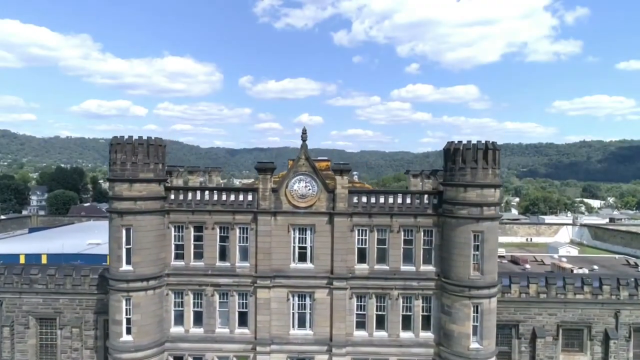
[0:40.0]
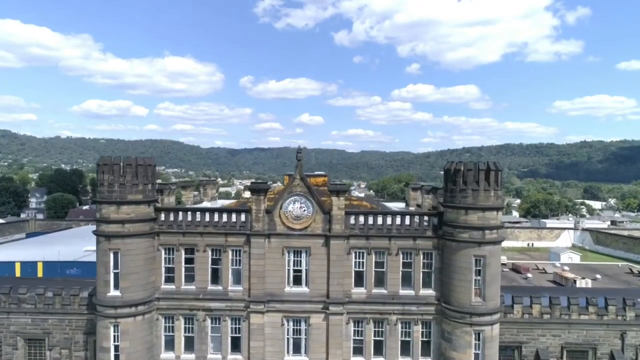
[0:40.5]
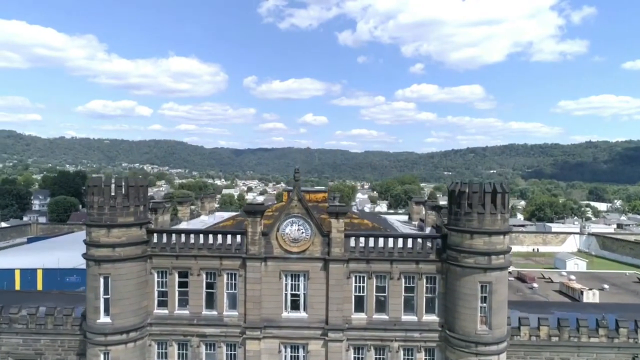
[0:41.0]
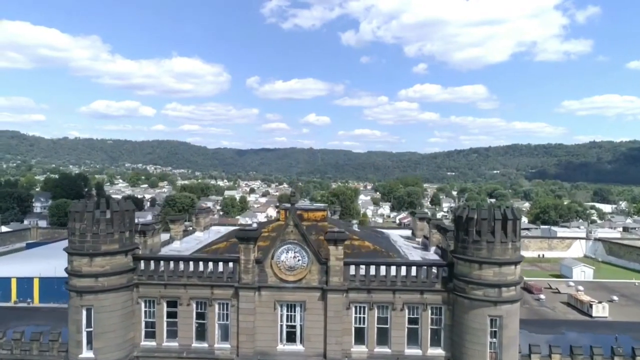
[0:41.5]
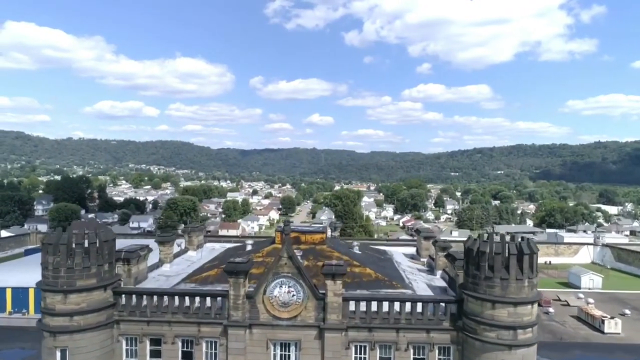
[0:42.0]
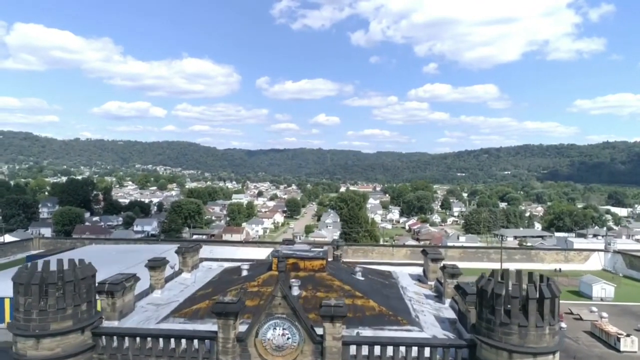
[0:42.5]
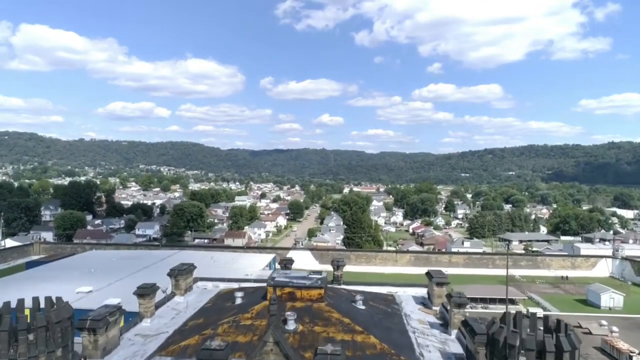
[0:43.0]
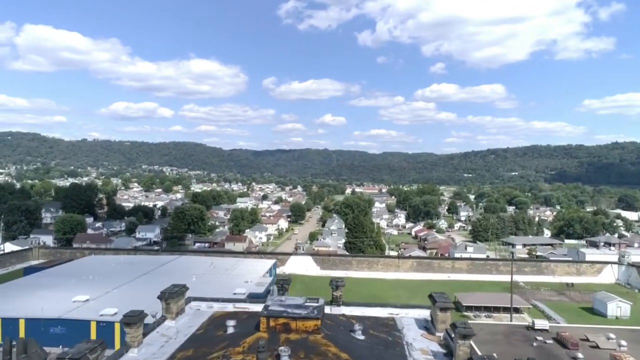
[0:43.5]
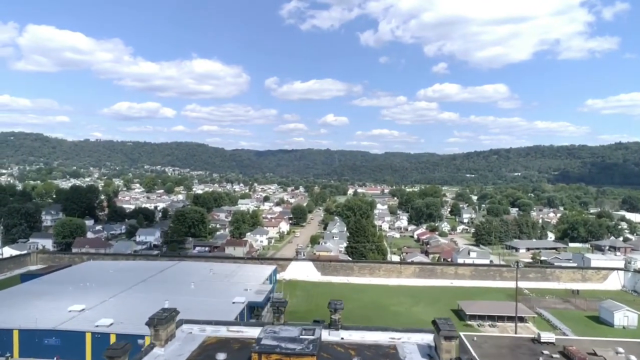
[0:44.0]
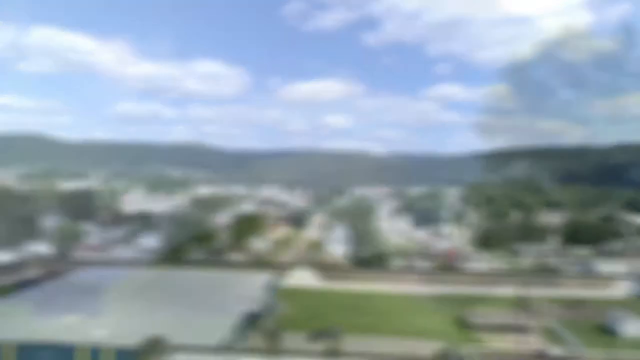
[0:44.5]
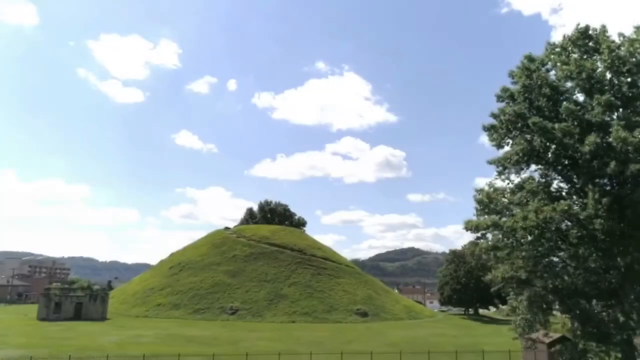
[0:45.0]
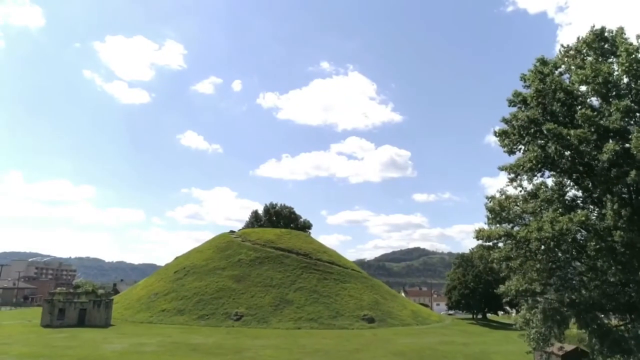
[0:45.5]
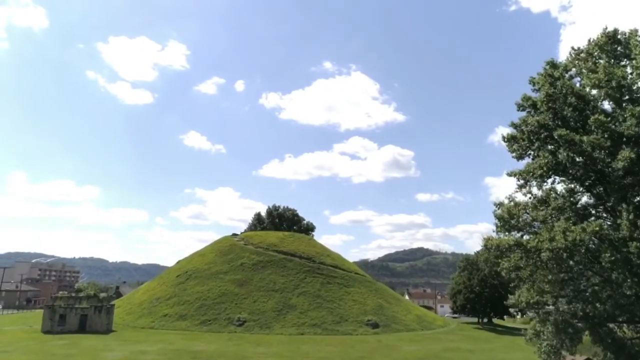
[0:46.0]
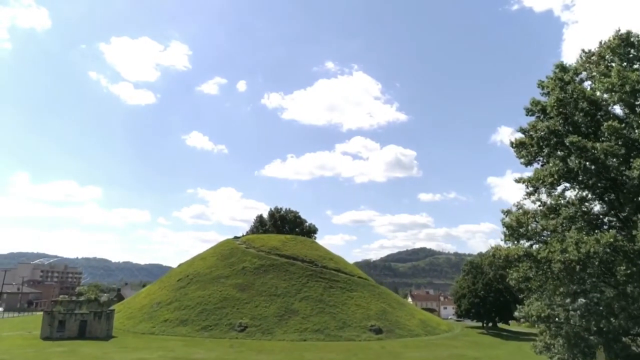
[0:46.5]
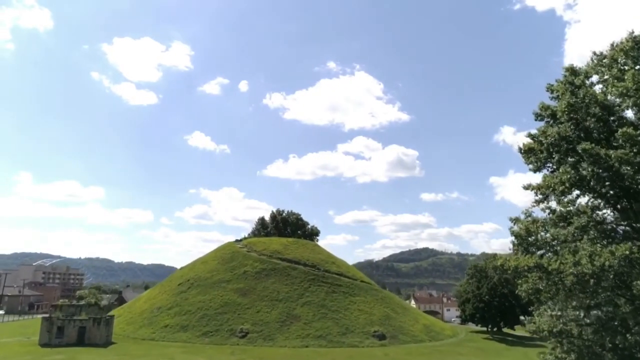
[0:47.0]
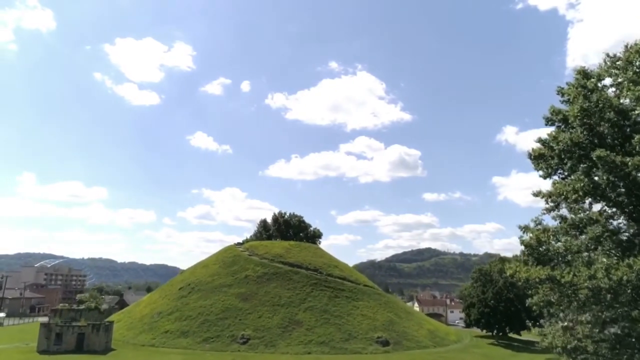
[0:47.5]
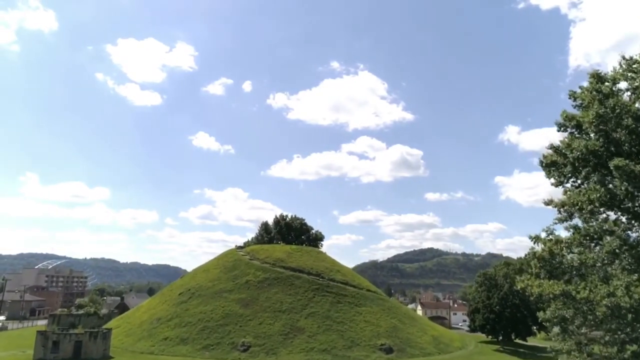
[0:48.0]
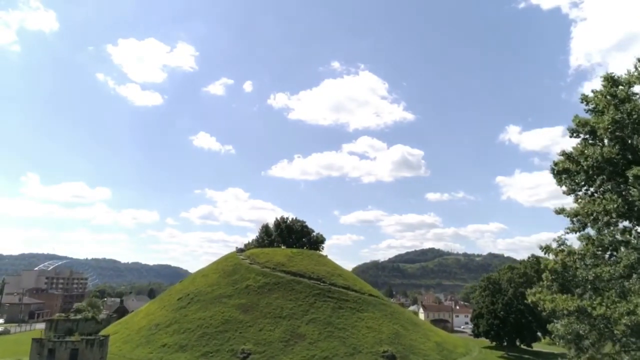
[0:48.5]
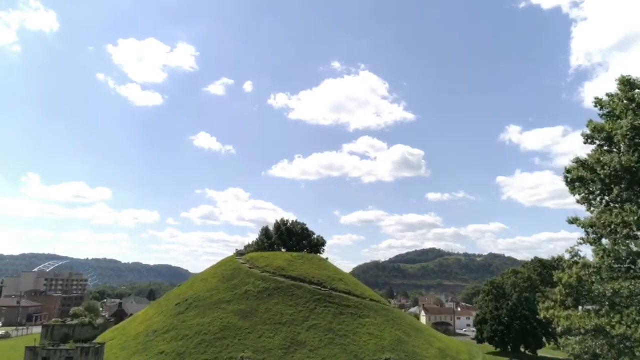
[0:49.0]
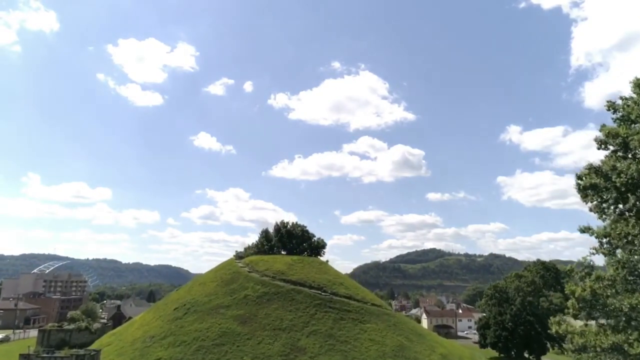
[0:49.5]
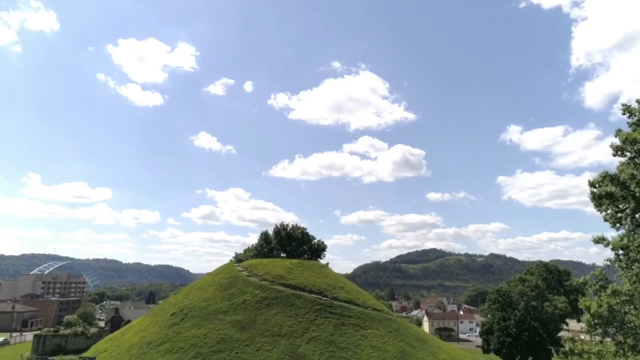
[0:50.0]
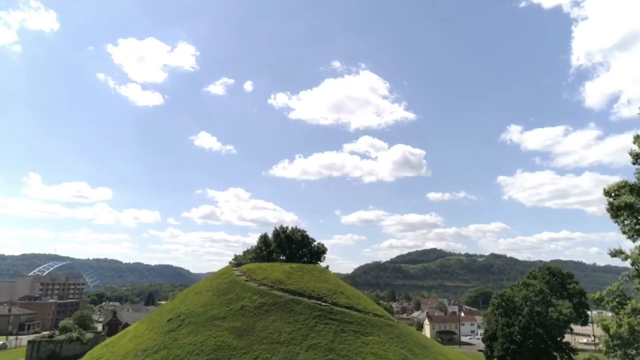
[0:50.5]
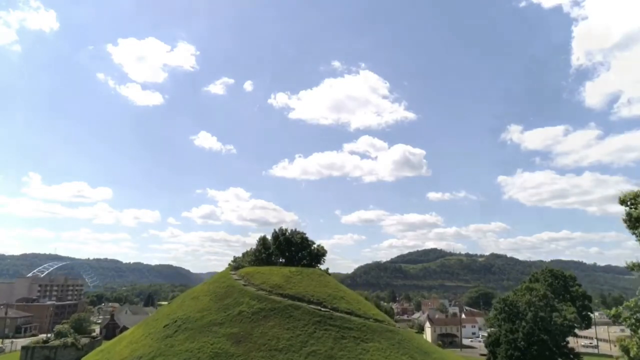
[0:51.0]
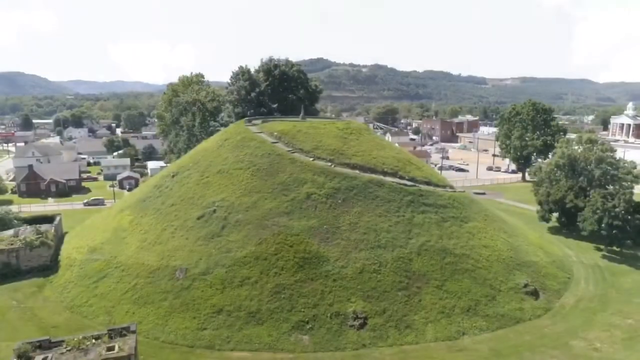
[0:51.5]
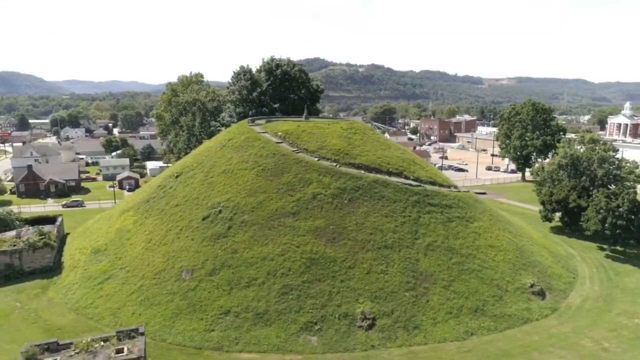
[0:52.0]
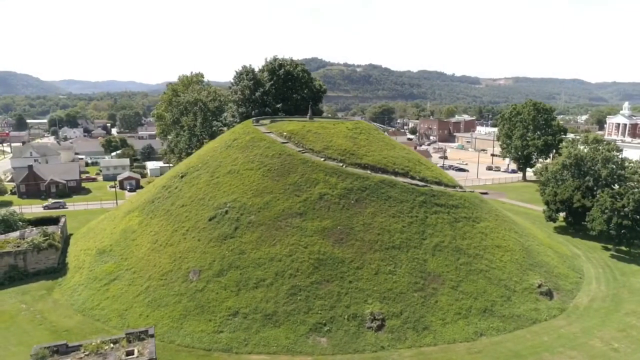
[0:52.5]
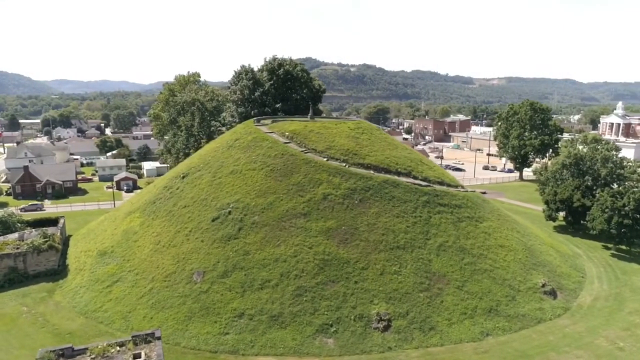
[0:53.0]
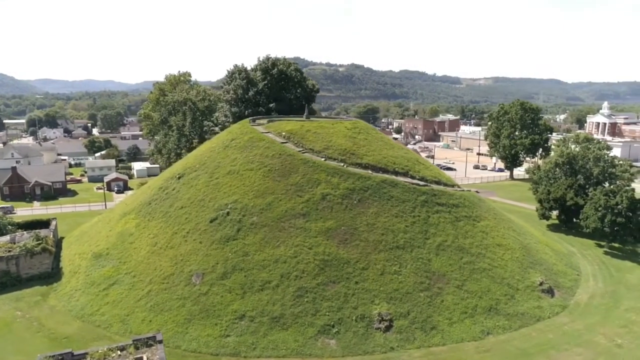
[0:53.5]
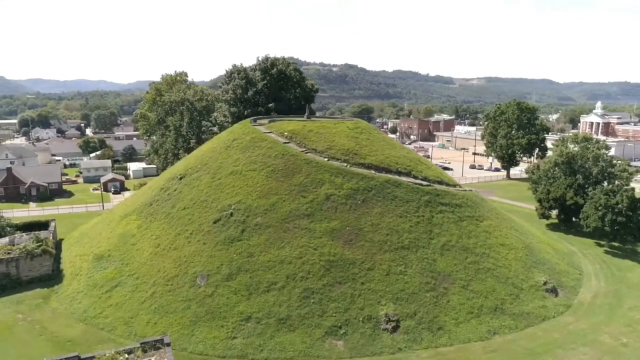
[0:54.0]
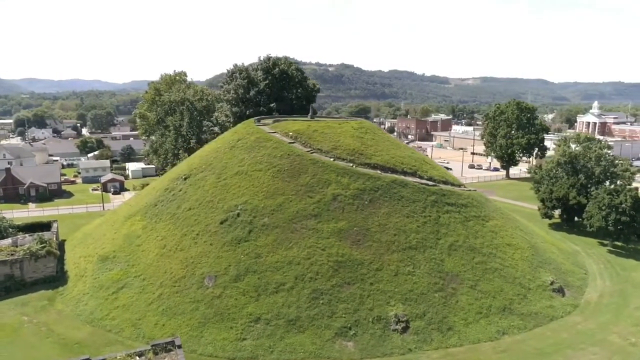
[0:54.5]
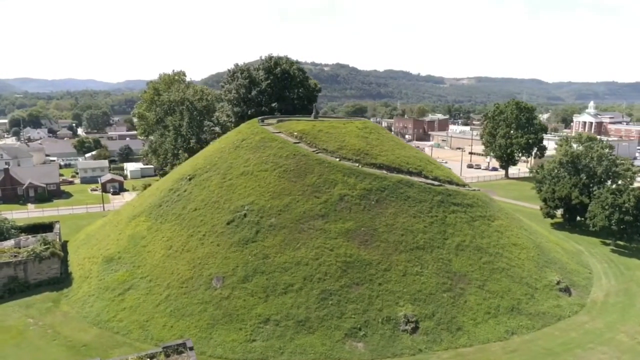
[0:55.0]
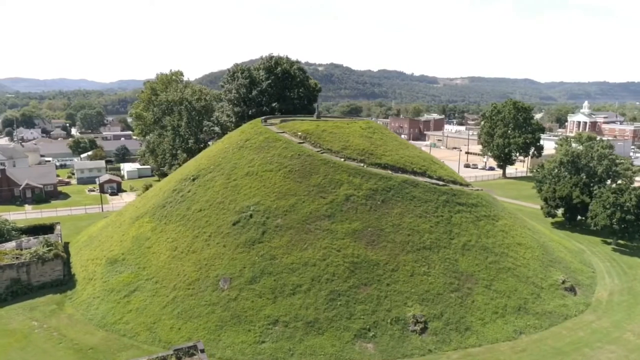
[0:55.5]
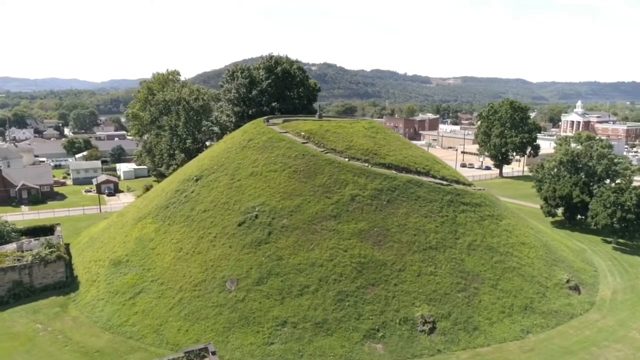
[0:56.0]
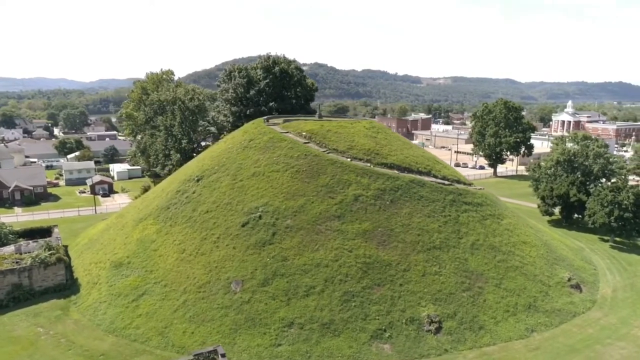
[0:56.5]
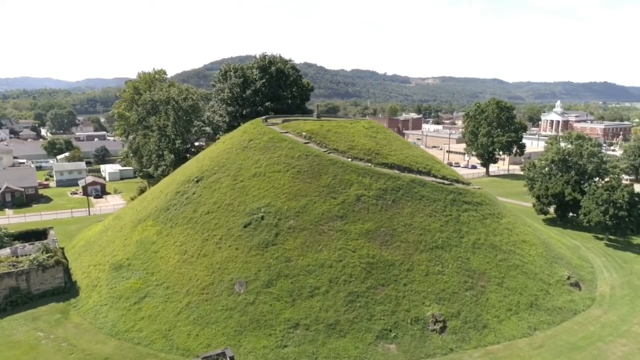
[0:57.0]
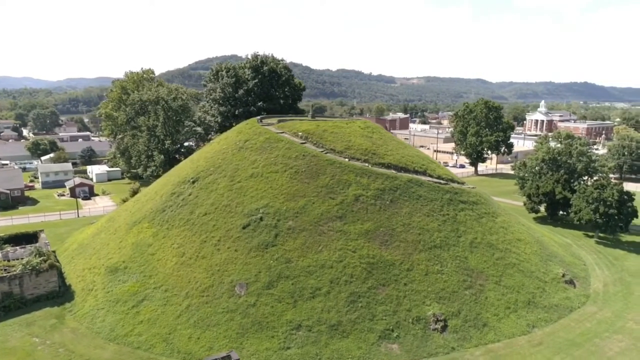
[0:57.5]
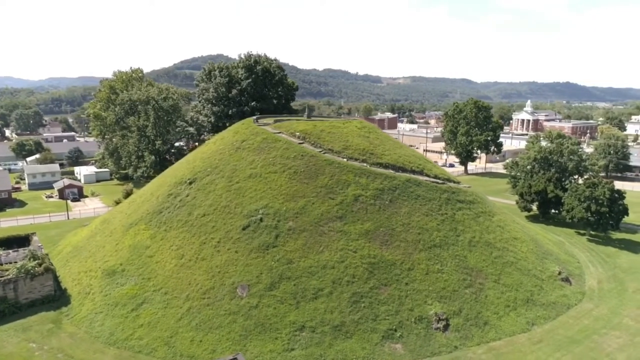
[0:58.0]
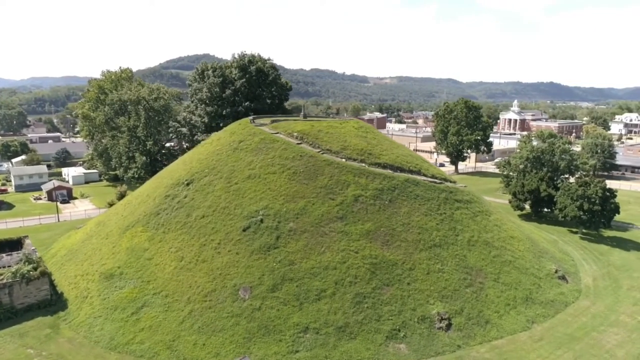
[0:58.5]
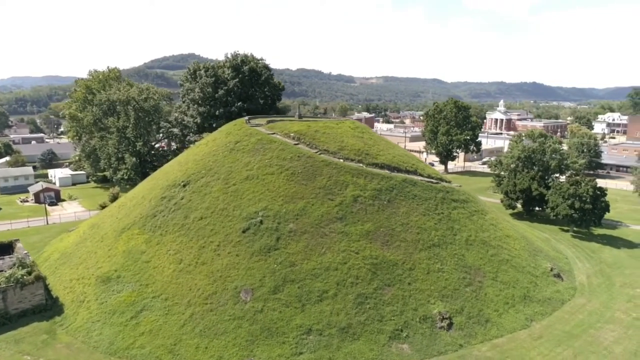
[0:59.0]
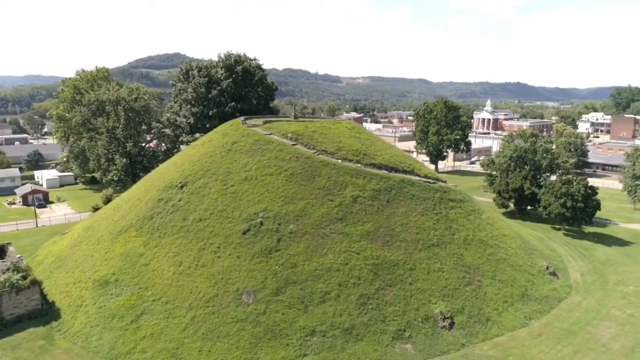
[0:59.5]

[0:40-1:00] Aerial drone footage shows a huge penitentiary building, probably quite old, made of a sort of grey stone. It has huge turrets, and a very high perimeter wall of the same kind of stone runs in a huge rectangle, with lots of green space inside it. The footage looks at the front of the building and then flies up and over it. It then shows landmarks in the local area around the penitentiary: a sort of big green mound with a path carved over it, with roads going around the mound, which appears to be in the middle of a park. There are a few trees around. The sky is blue with just a few white fluffy clouds, and the scenery is very green and lush.